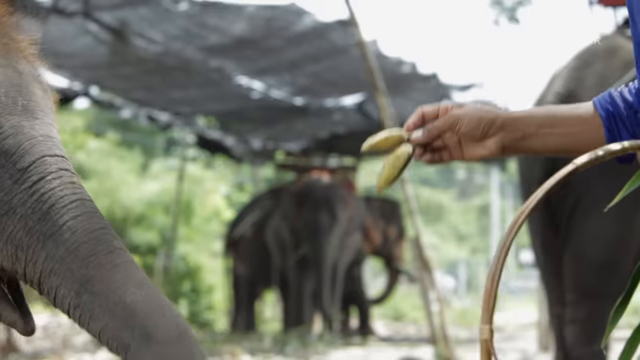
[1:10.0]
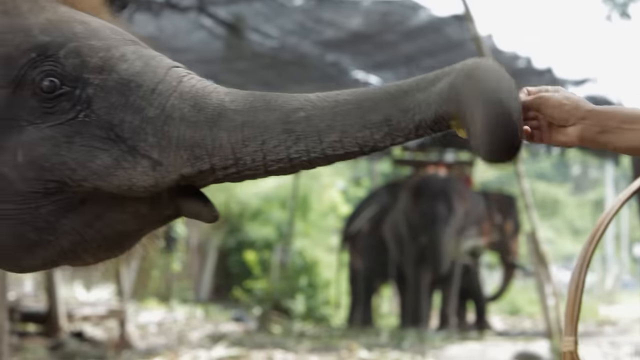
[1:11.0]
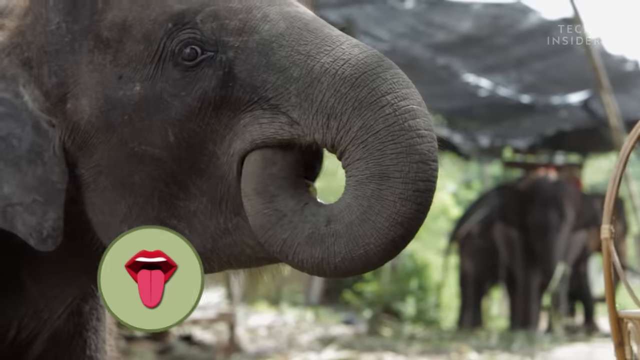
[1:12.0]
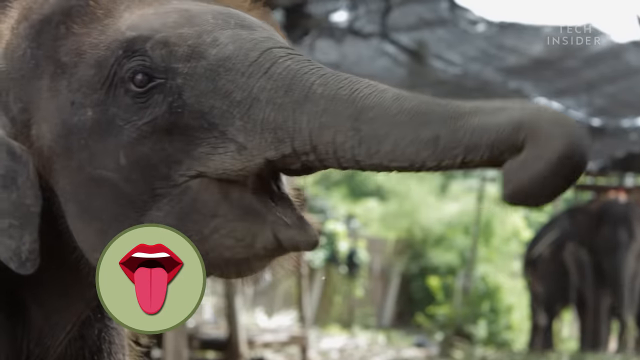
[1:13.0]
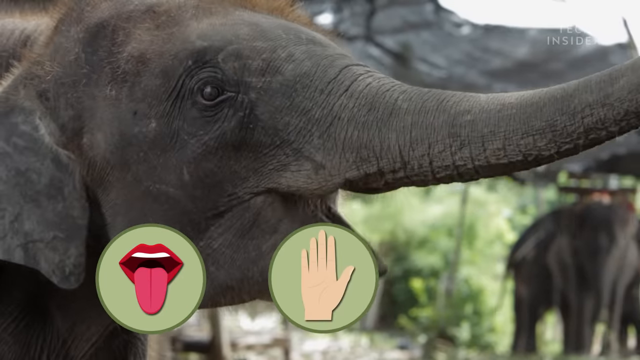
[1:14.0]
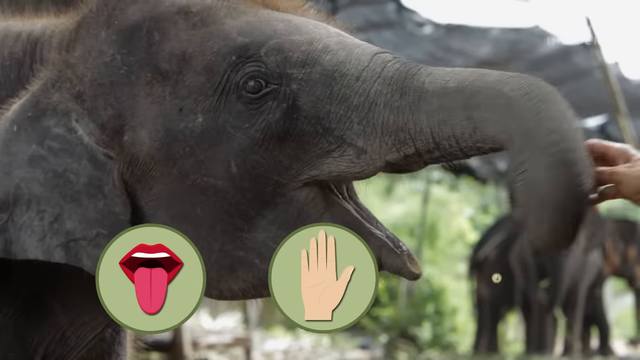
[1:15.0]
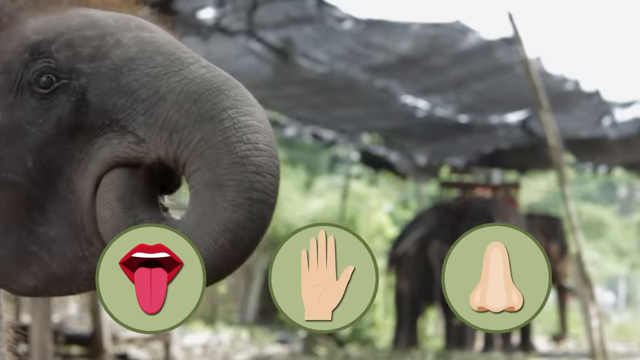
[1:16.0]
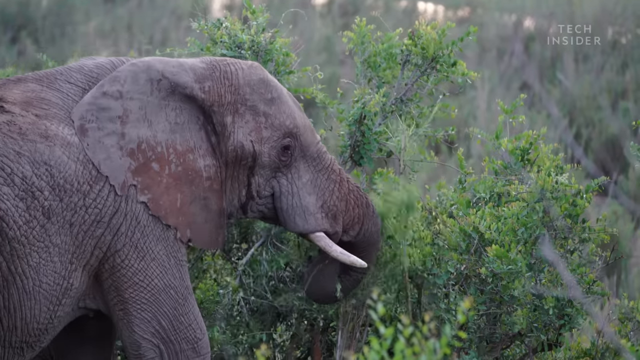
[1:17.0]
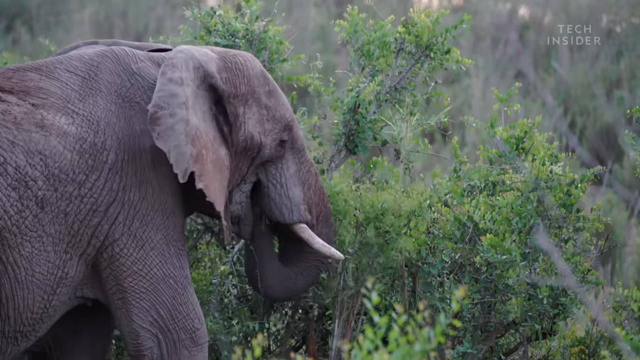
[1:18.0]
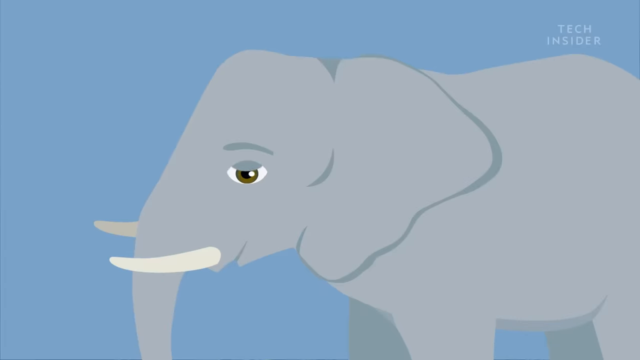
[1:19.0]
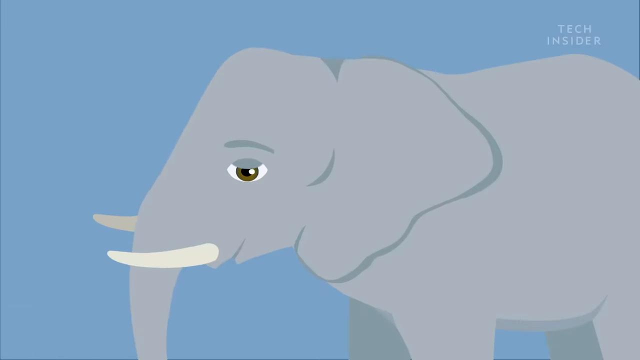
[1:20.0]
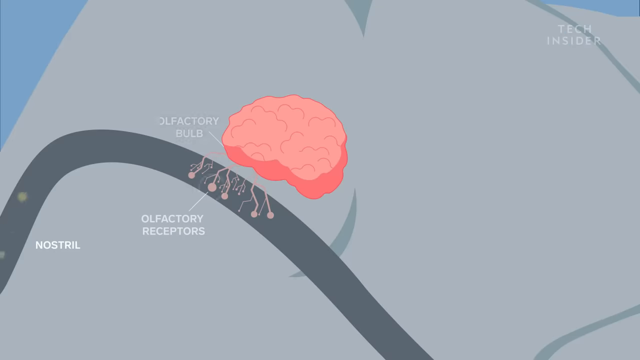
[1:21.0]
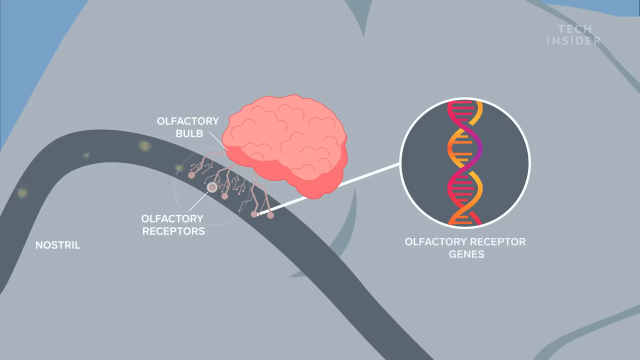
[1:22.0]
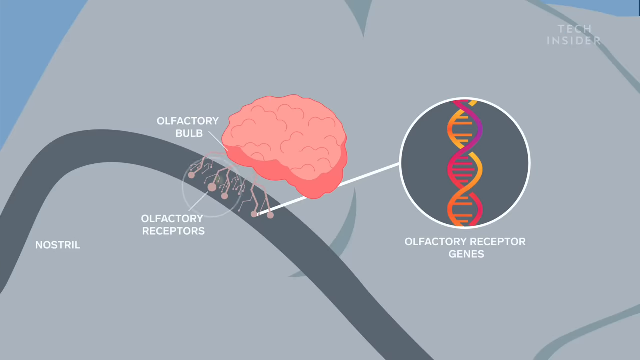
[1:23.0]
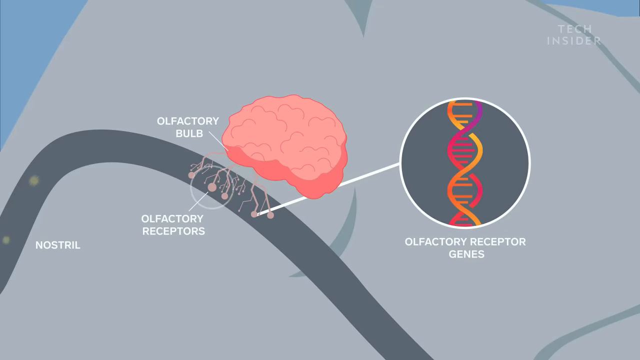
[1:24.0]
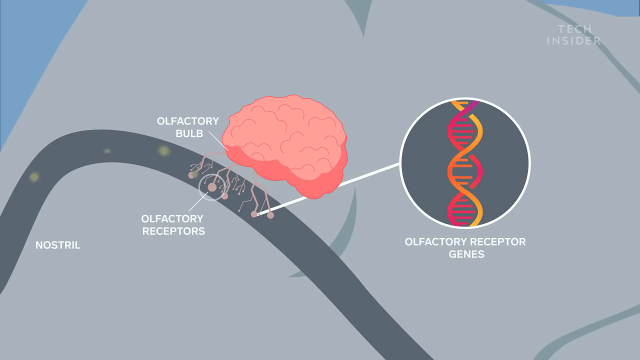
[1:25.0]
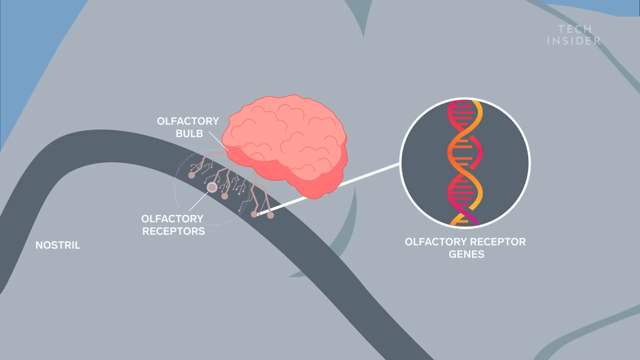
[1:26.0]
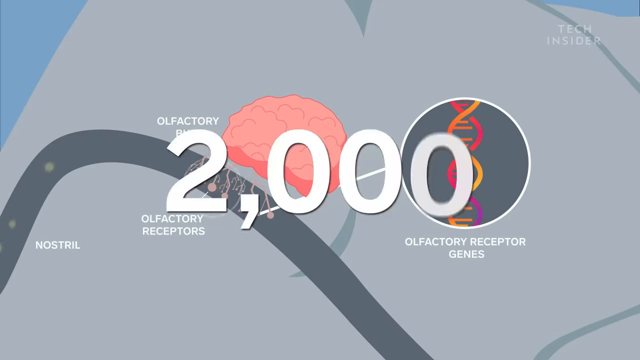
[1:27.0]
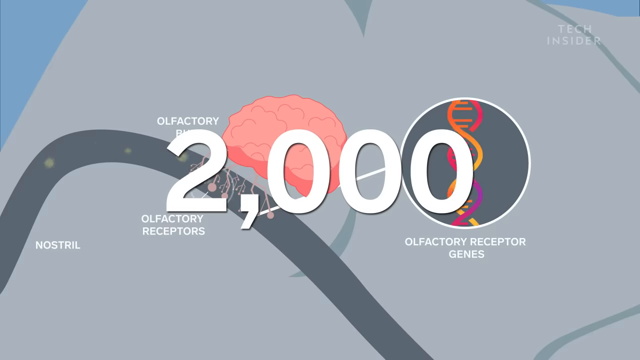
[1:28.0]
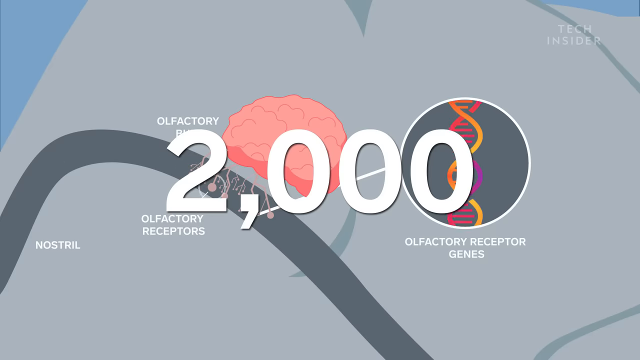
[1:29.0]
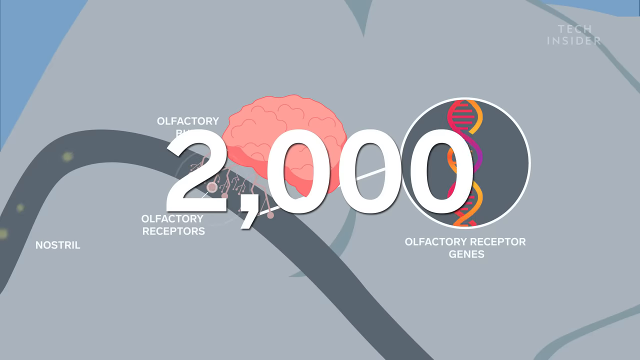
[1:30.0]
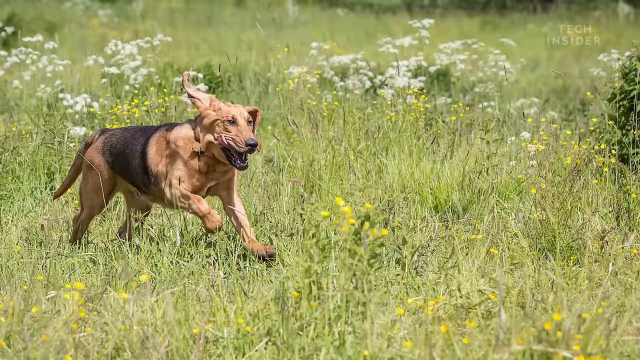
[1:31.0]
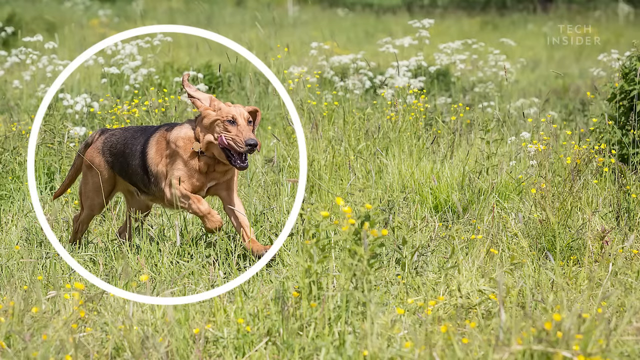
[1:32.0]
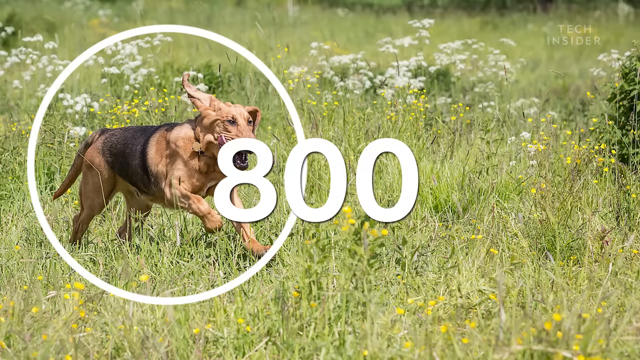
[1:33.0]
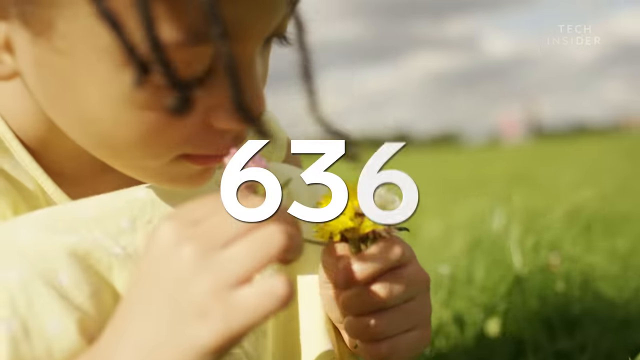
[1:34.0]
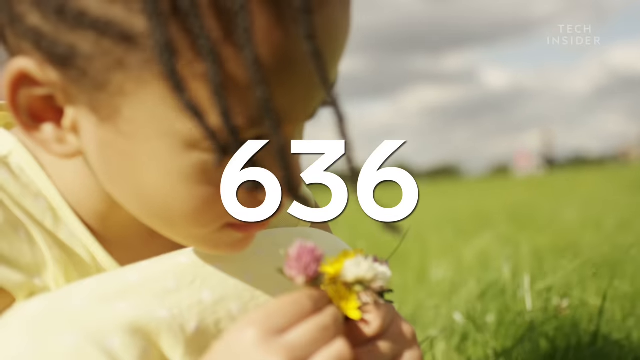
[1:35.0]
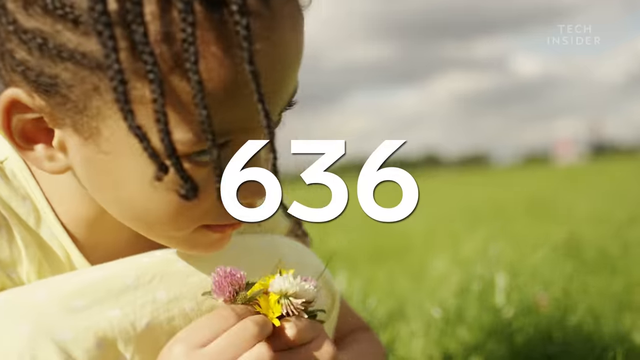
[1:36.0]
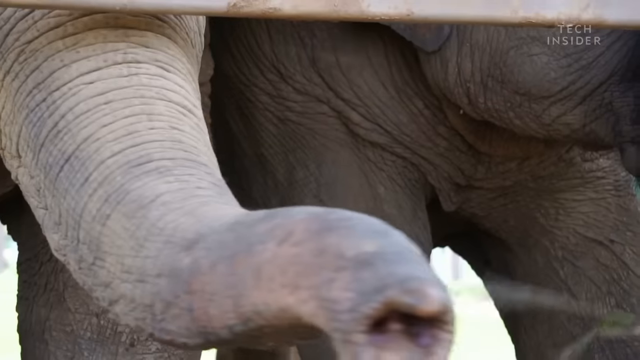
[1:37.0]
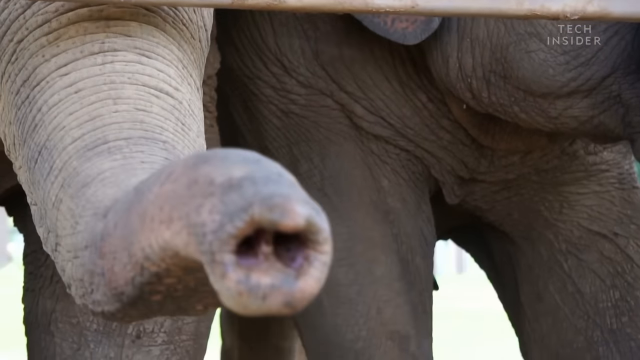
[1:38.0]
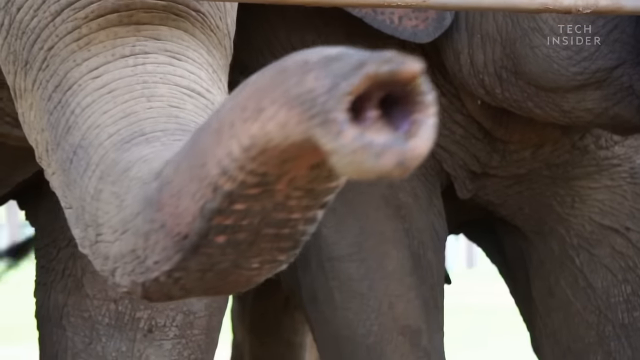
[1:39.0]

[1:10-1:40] A baby elephant with some red hair on top appears. Tongue, hand and nose icons appear on a green background. Then an elephant eats, followed by a cartoon elephant with a stylized pink brain and text labels reading "nostril", "olfactory receptors", "olfactory bulb" and "olfactory receptor genes", shown with a DNA strand and a circuit. "2000" is written, then a picture of a dog becomes circled; the dog runs across a field of tall grass with some white and yellow flowers. The figure "800" is written, then a little girl smells some flowers and "636" is written. Then an elephant appears with its trunk and nostrils closed up, with another elephant in the back.